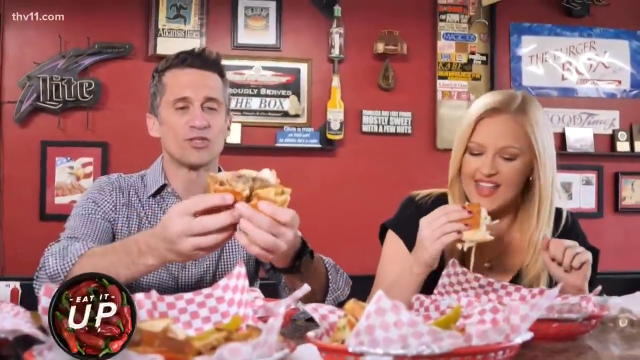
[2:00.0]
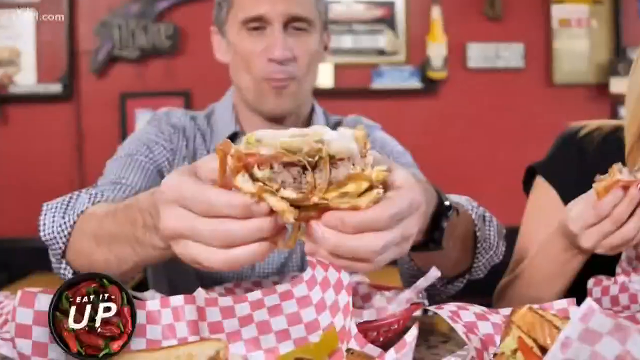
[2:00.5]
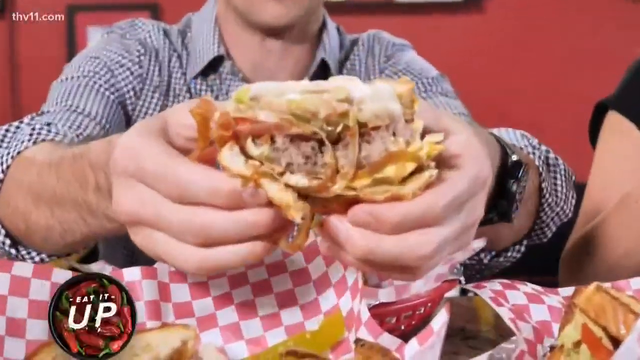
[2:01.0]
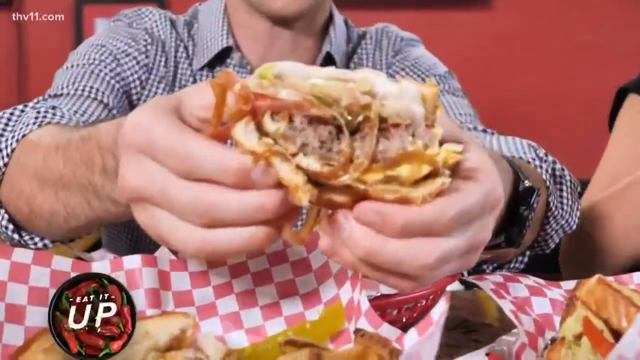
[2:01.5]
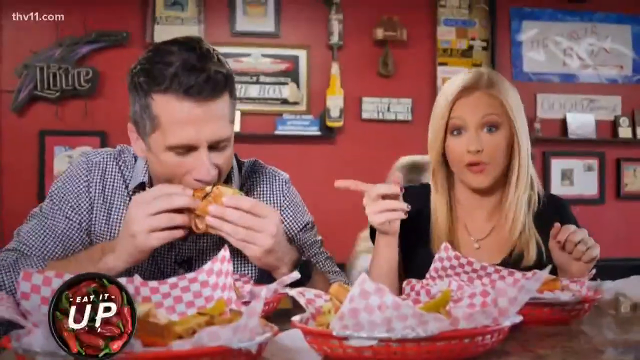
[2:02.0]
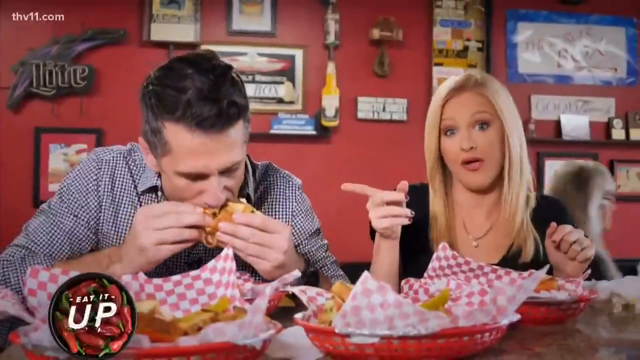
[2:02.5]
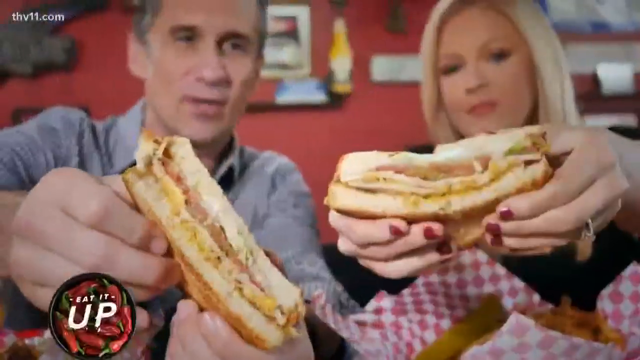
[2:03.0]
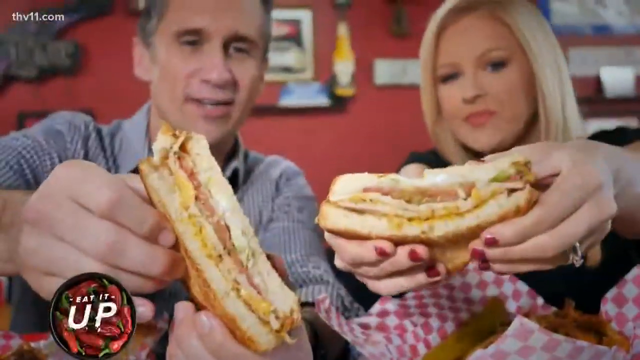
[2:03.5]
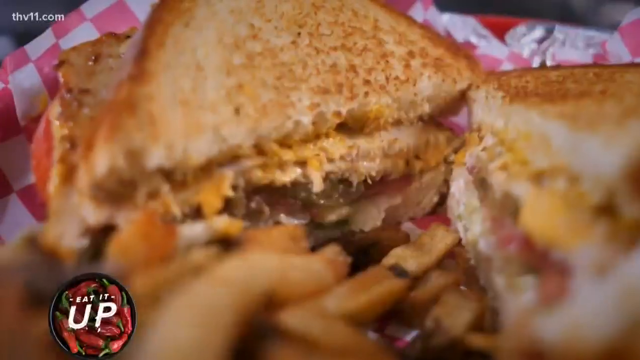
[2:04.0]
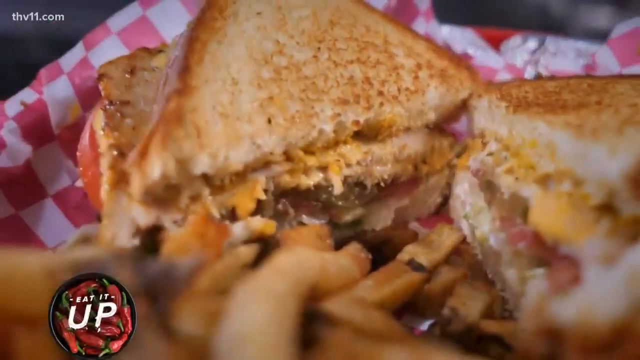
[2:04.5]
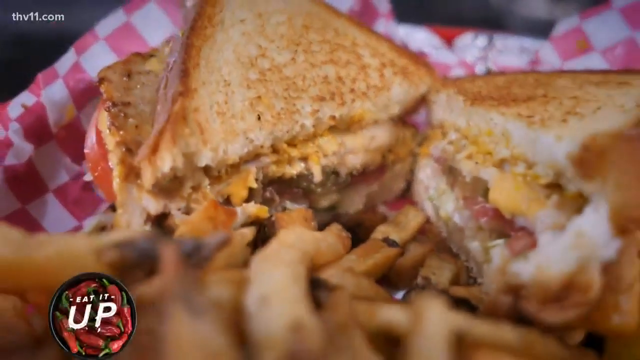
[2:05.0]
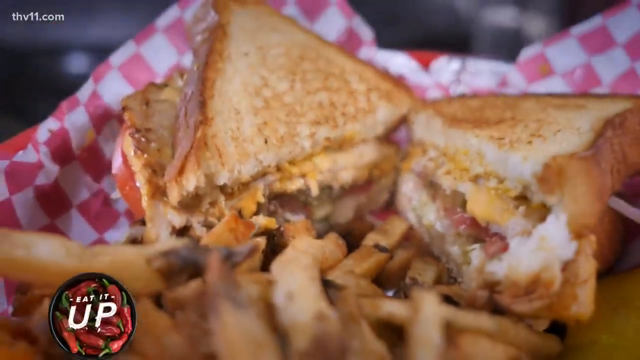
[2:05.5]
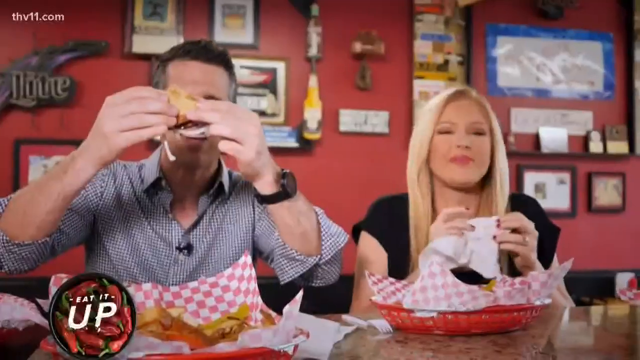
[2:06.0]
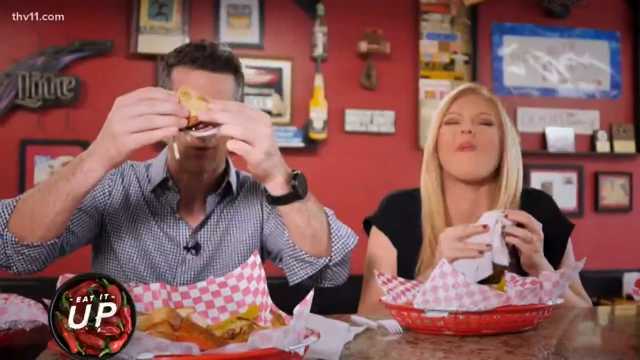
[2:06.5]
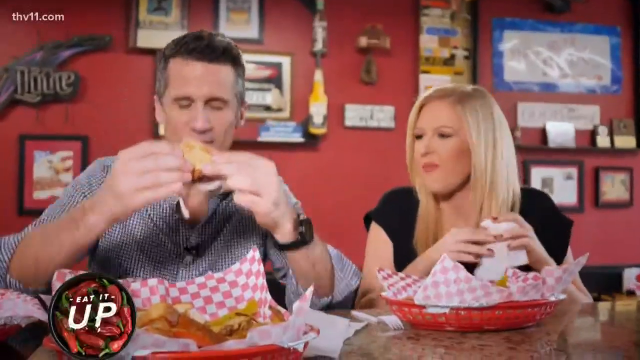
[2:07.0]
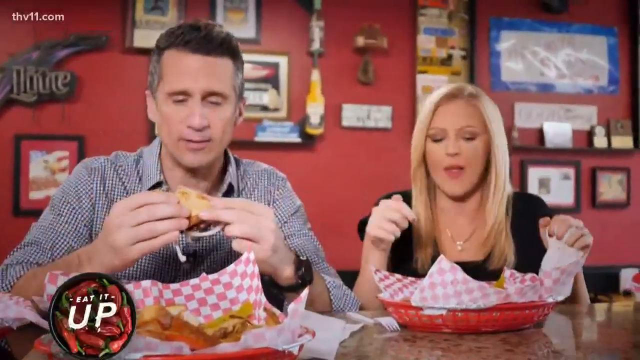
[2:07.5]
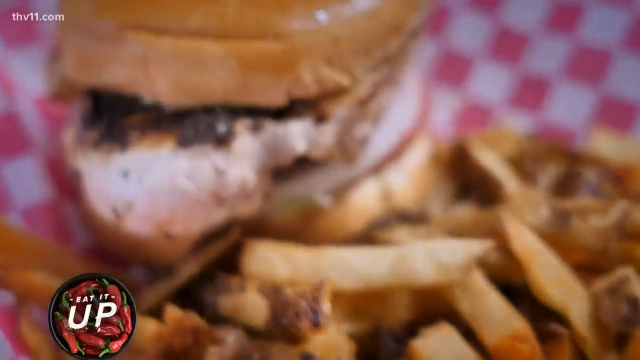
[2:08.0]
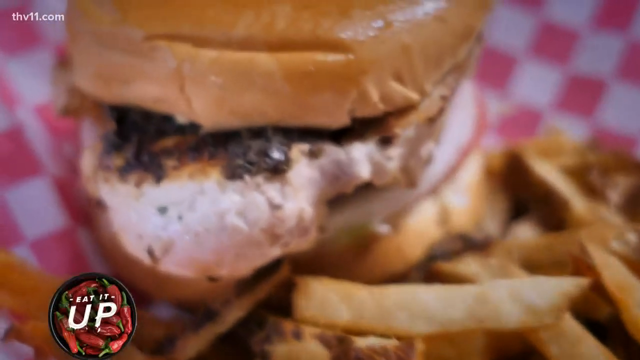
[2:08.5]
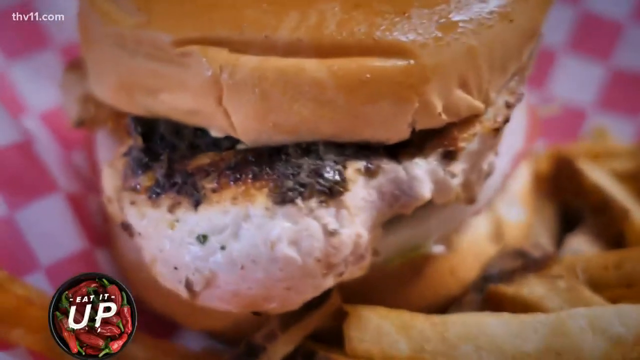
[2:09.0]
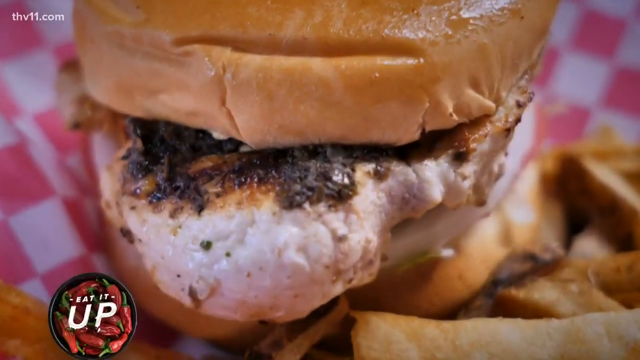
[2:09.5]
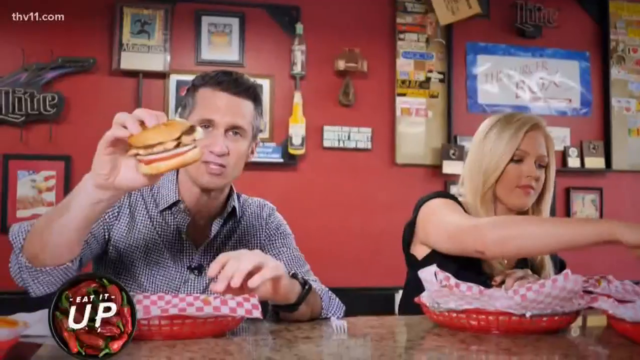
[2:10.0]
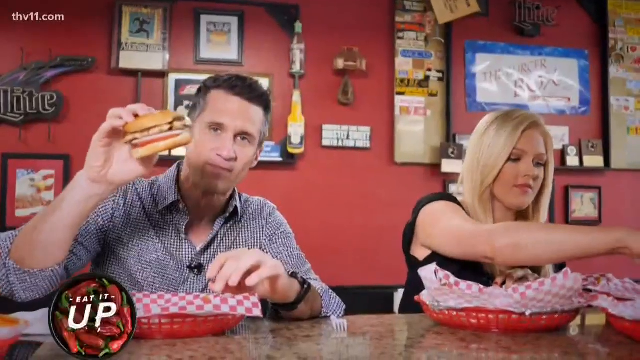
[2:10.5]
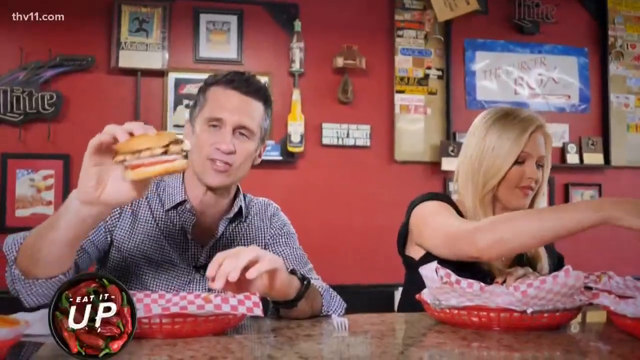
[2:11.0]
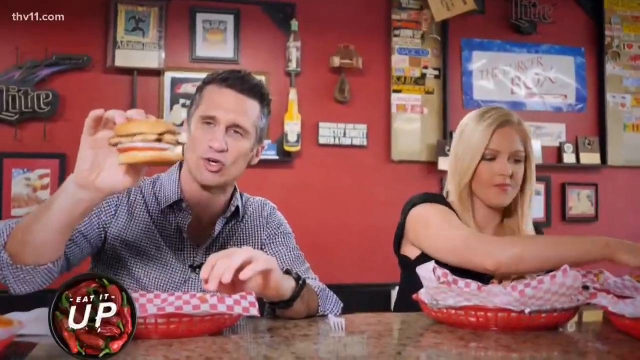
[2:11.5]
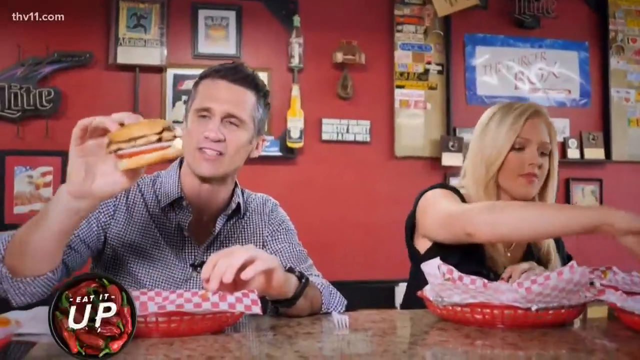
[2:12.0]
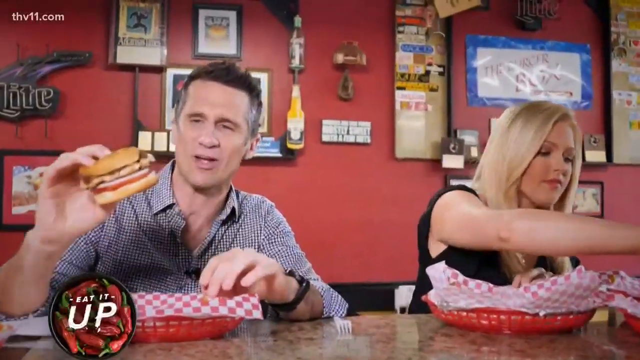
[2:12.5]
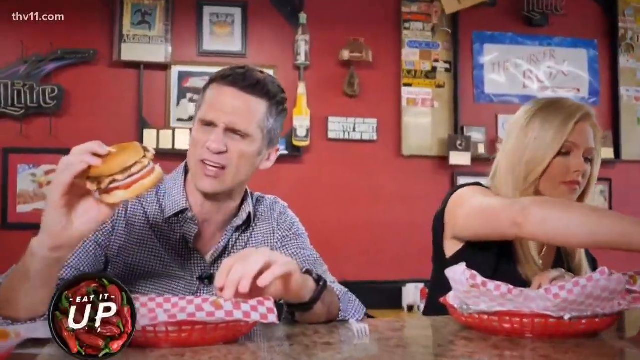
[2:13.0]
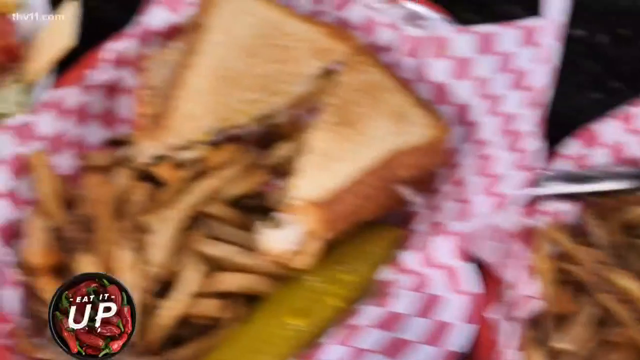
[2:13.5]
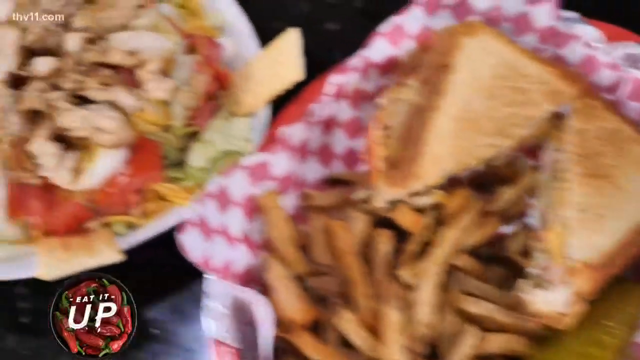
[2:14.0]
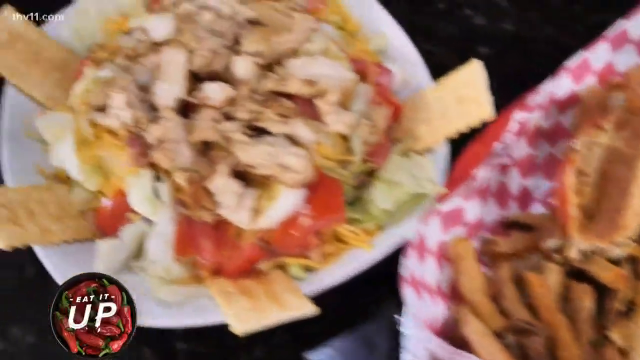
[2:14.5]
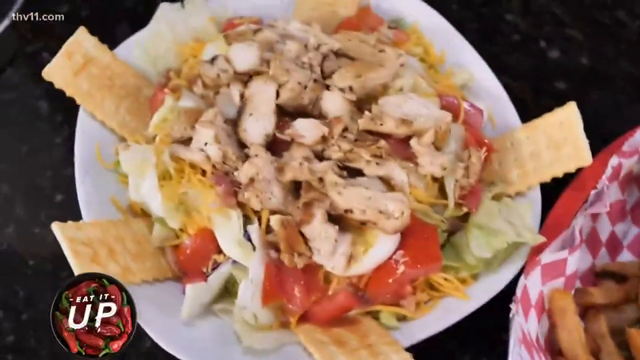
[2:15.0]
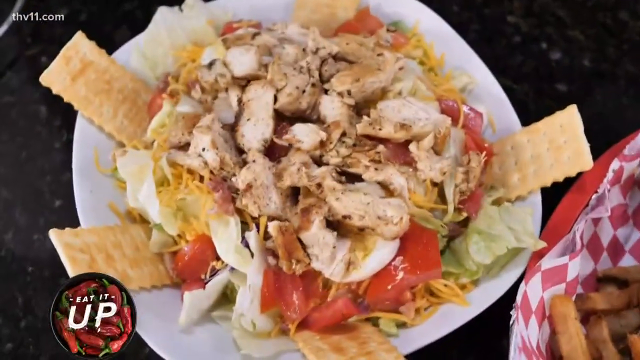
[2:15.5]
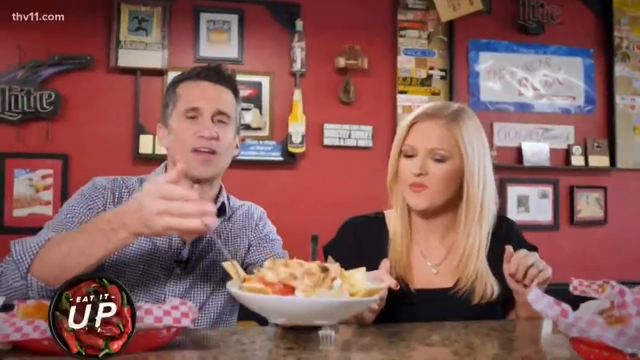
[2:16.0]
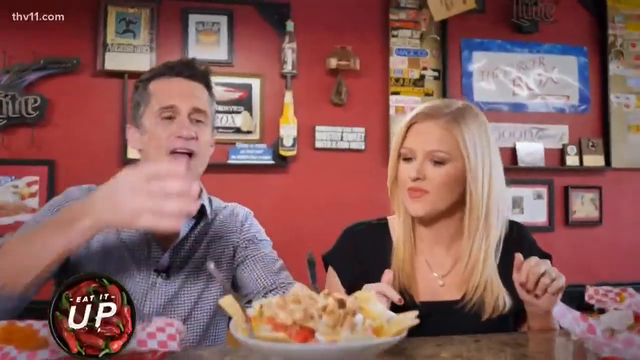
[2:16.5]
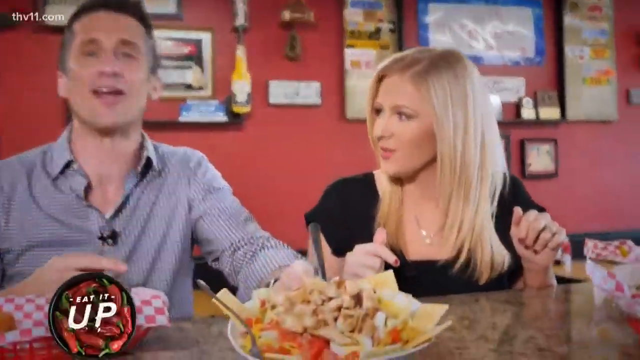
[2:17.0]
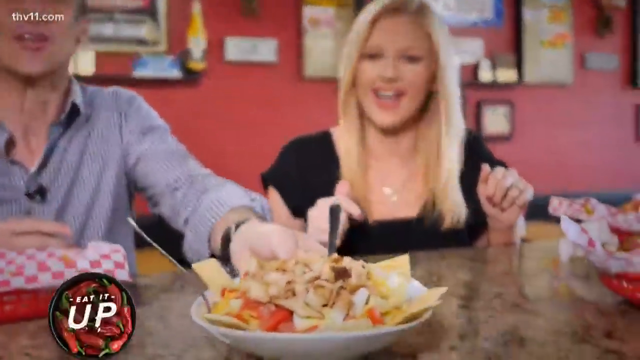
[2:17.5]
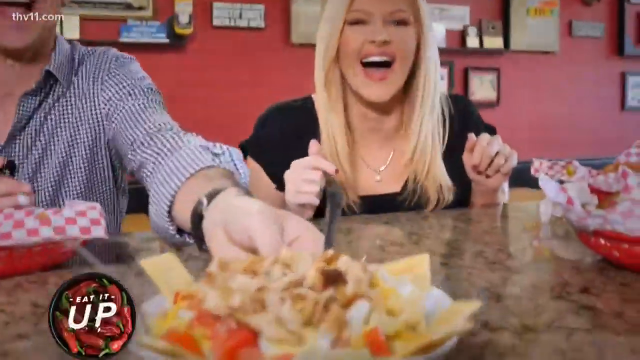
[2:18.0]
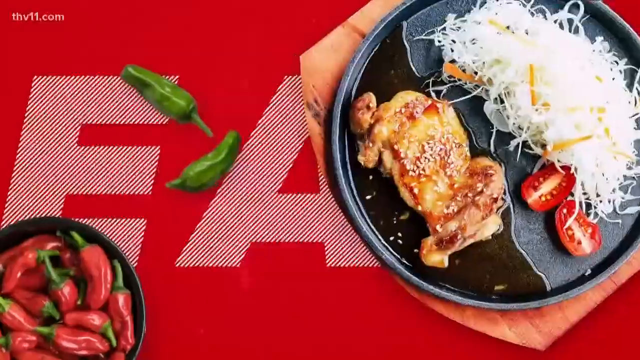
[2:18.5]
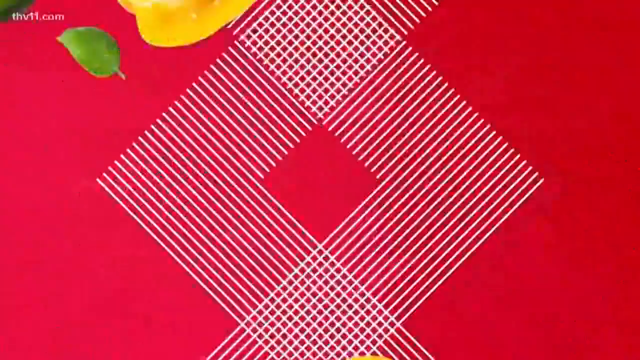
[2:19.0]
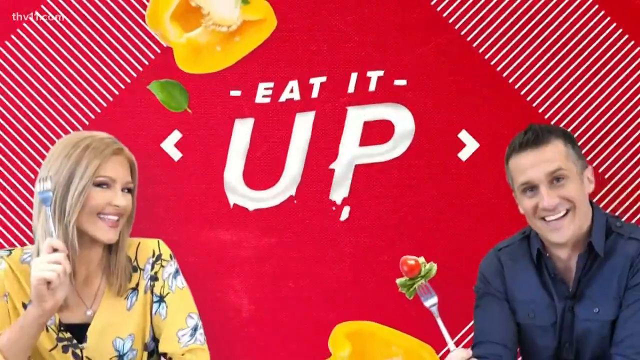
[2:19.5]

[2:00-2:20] The YouTubers eat the sandwich and seem to enjoy it, talking and nodding. The camera zooms in on the food on the plate. One YouTuber has long blonde hair and wears a black top. They are now seated, facing the camera, in the restaurant, where many things are hung on the wall: portraits, certificates, banners and more. The camera zooms in on the sandwich they are eating, which is packed with eggs, patties, cheese and tomatoes; it is a really huge sandwich and looks mouthwatering as the YouTubers taste it and enjoy the food.